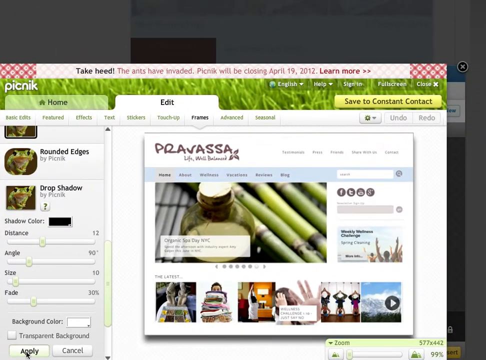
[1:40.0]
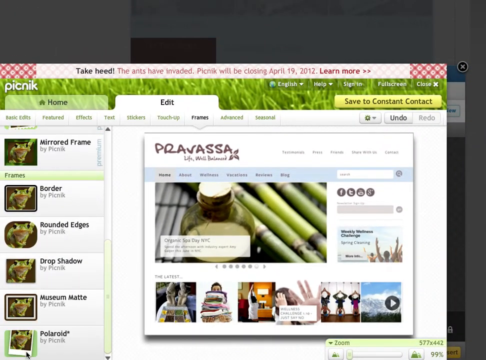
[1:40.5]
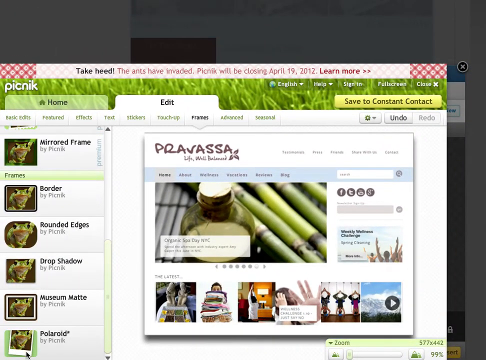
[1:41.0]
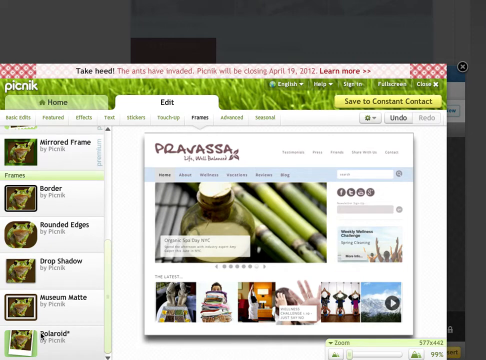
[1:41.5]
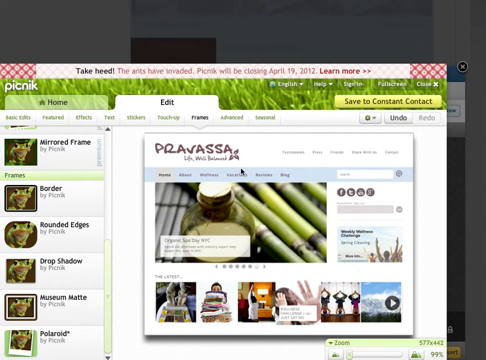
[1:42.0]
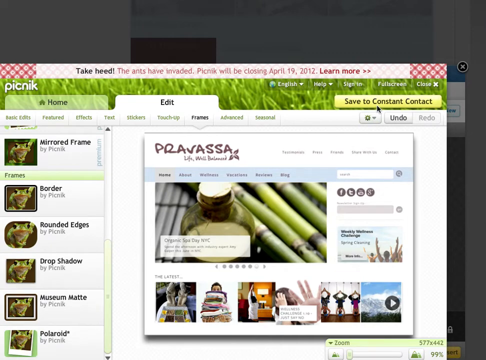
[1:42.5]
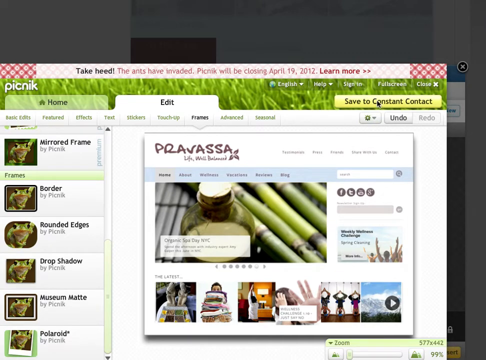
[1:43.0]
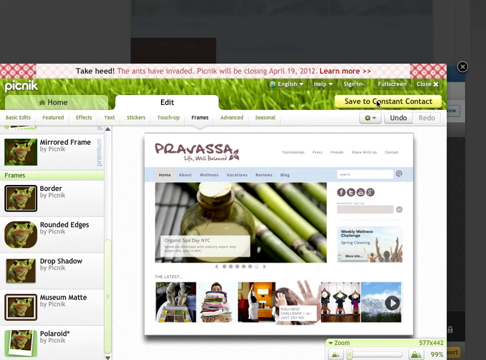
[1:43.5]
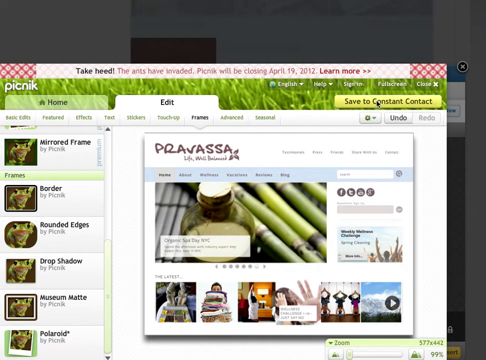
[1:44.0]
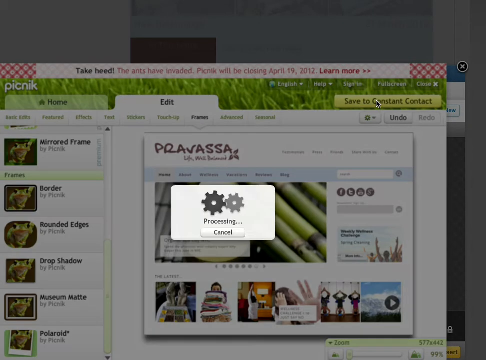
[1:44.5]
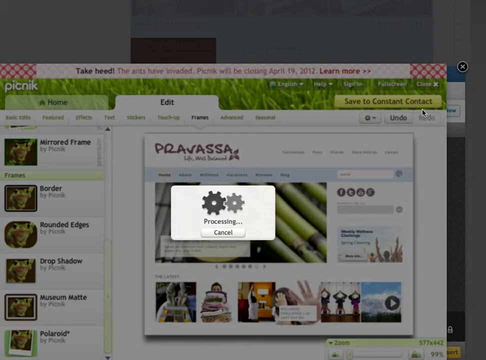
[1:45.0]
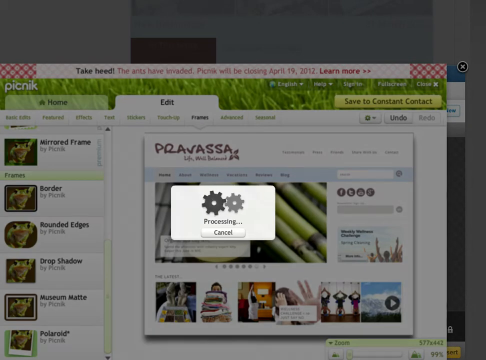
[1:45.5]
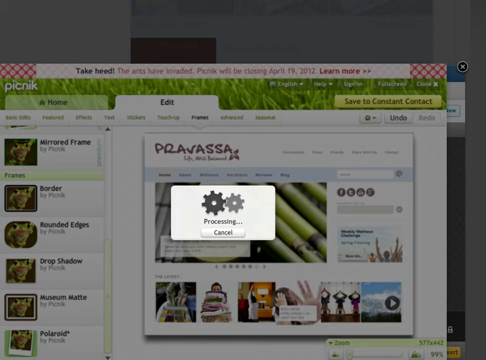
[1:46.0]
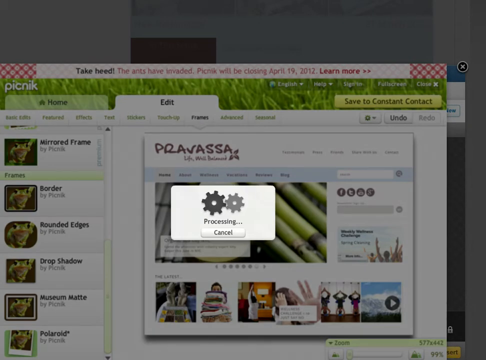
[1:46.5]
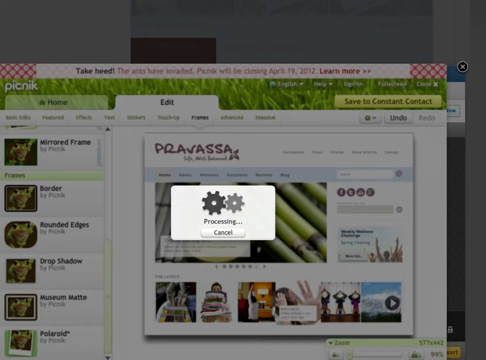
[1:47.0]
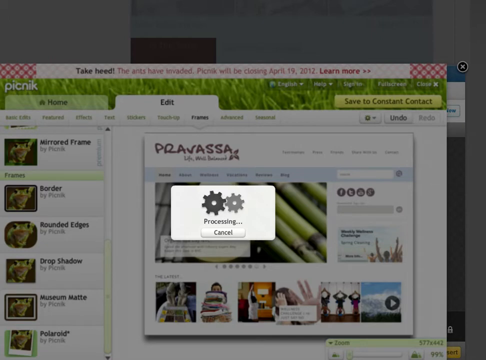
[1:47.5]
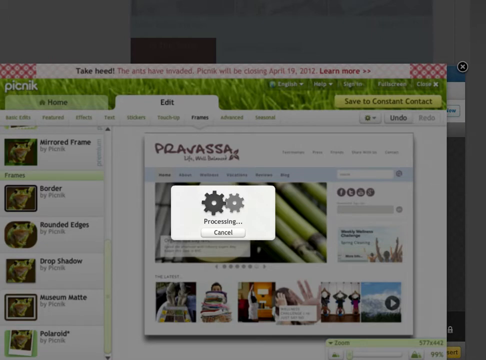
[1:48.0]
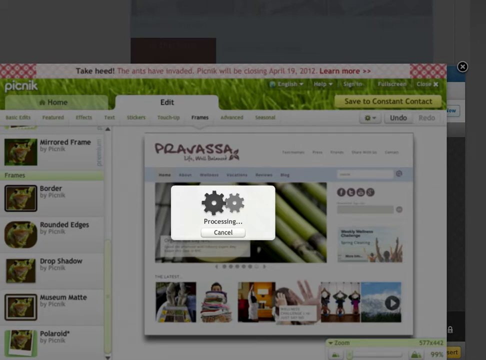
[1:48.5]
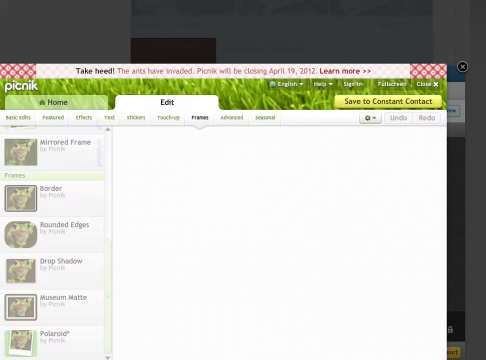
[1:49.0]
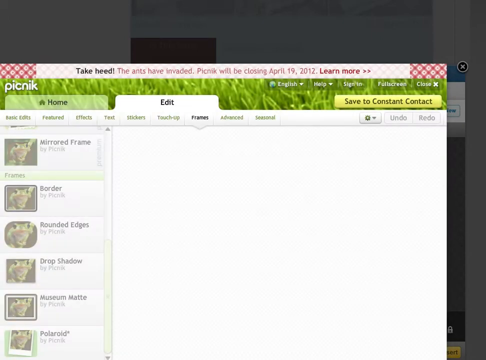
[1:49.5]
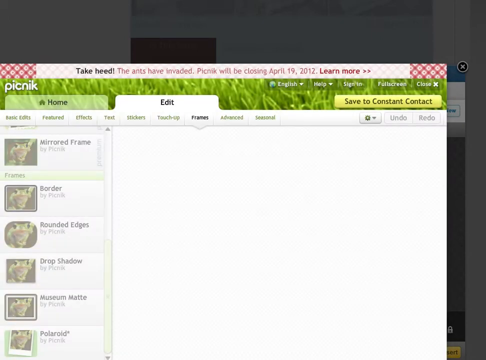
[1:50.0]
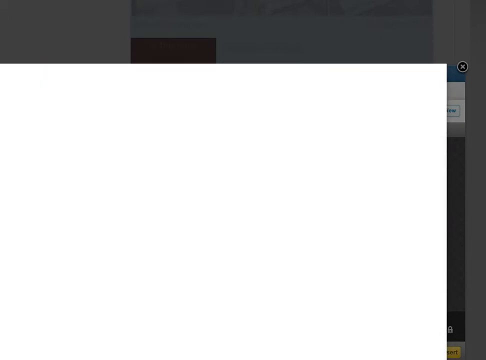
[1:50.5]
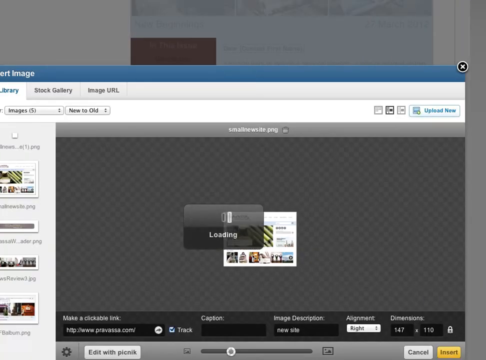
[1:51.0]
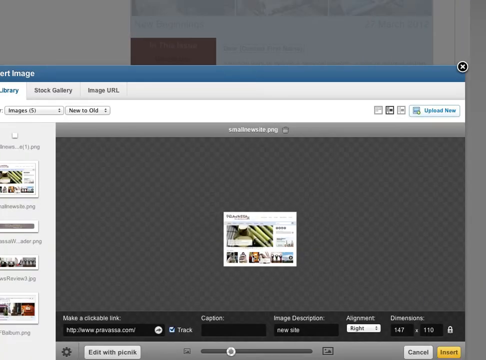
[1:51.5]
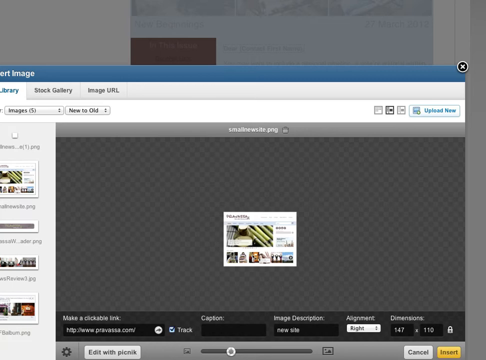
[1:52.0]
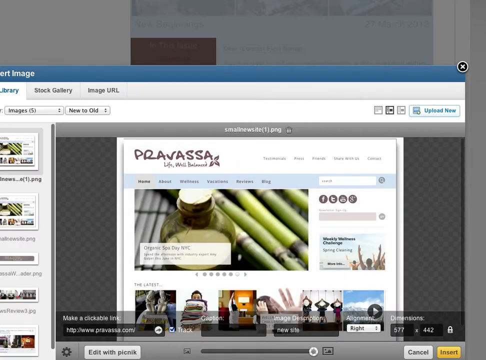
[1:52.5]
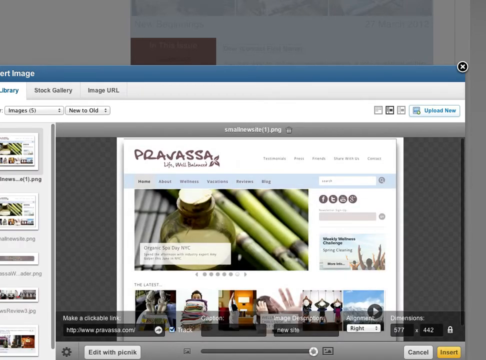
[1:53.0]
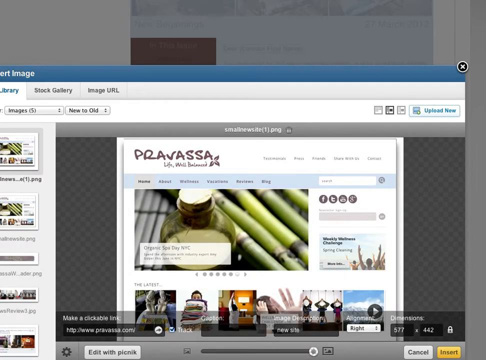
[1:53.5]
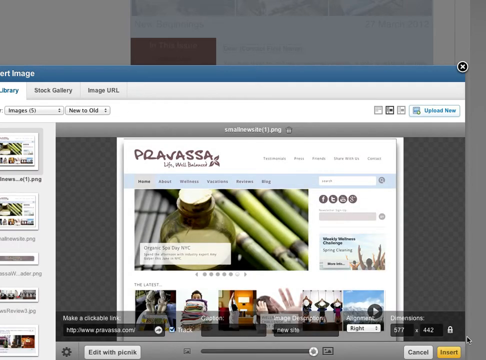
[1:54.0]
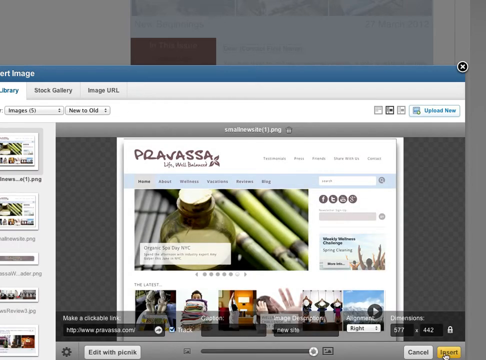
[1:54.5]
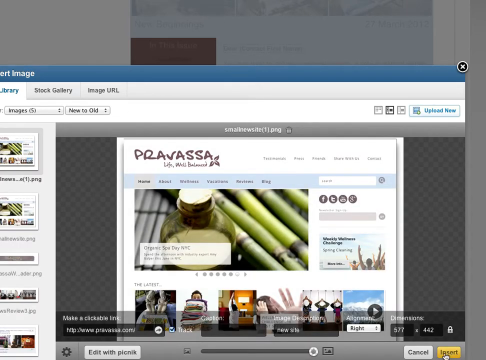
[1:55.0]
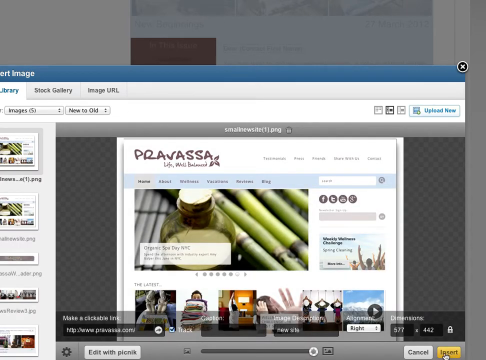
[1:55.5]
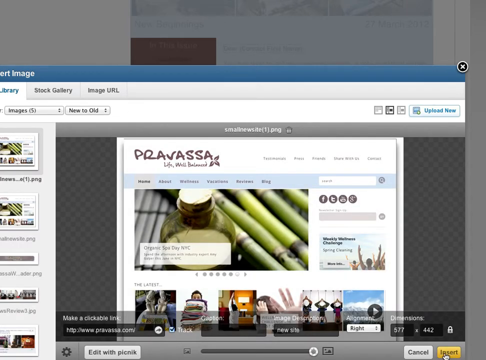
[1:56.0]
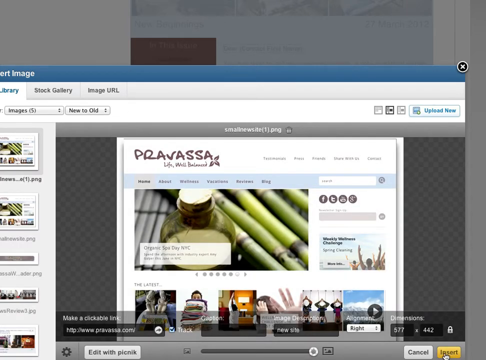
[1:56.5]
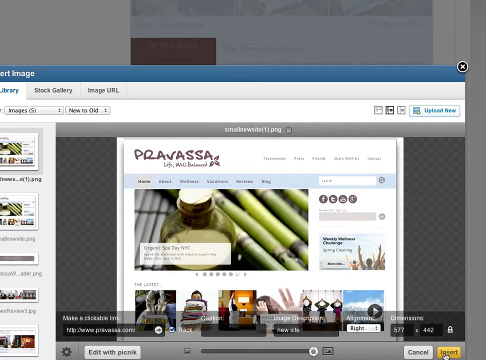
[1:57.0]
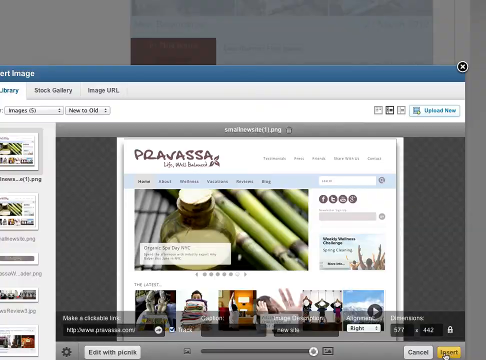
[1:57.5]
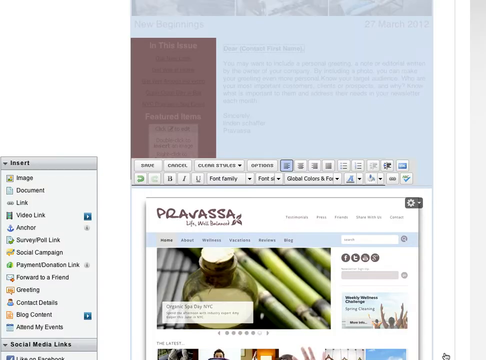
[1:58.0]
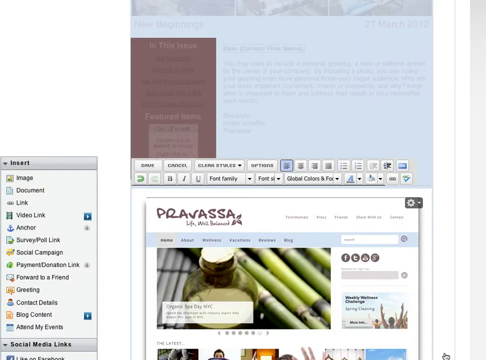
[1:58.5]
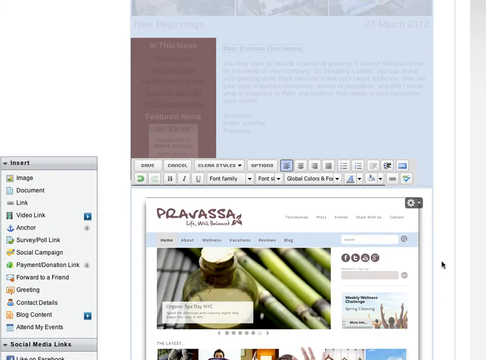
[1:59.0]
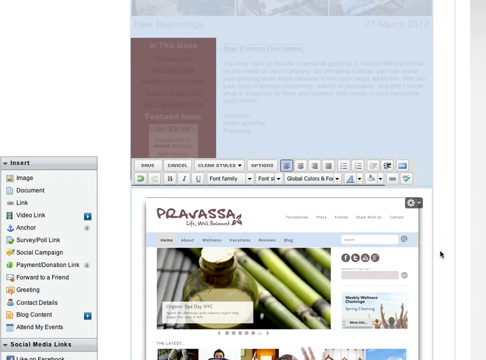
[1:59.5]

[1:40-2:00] The computer screen shows the word "Pravasa" directly in the middle on the right side of two partitioned blocks: the first is a scrolling area and the second is a larger area with multiple clickable areas. The larger area, spanning from mid-left to mid-right of the screen, has what look like green bamboo shoots in the top right corner coming down three-fourths of the way. There is a round bottle that looks greenish, with a white substance at the base and a cork top sticking up an eighth of an inch from the bottle. To the right are the Facebook and Twitter emblems and two other emblems, and a vertical gray square box that looks like it has a drop-down menu. Underneath, about an eighth of an inch from the right and directly below that box, is another area; in its lower right corner are people seen from behind with both arms outstretched up. There is a blue box.